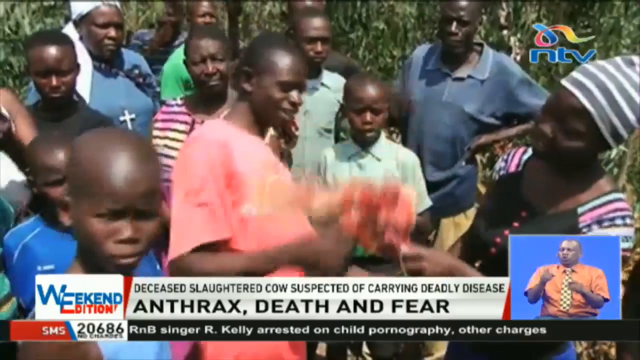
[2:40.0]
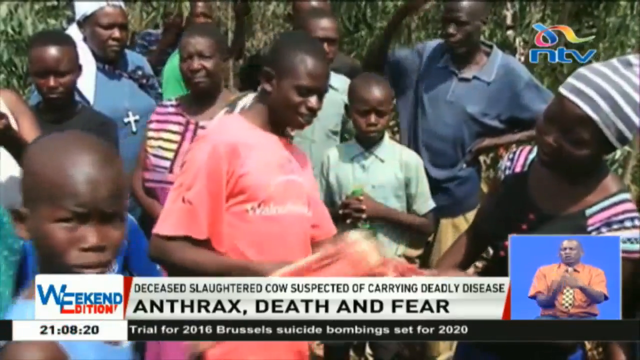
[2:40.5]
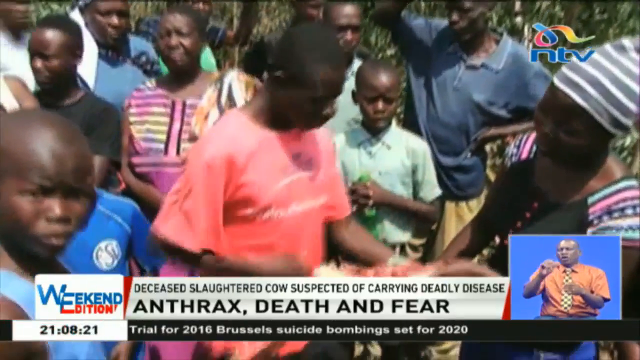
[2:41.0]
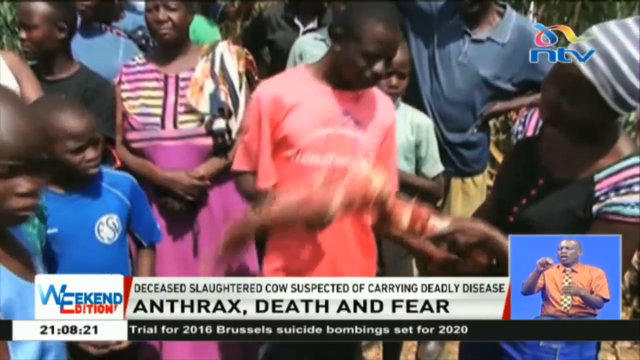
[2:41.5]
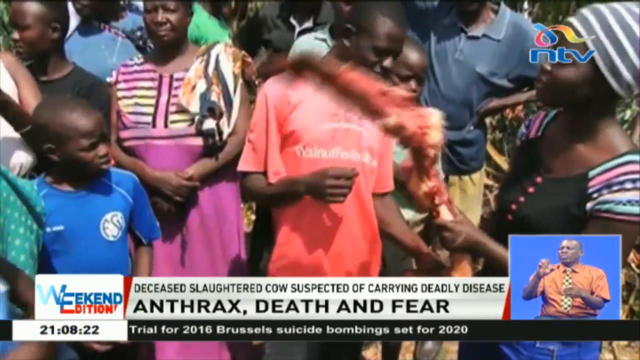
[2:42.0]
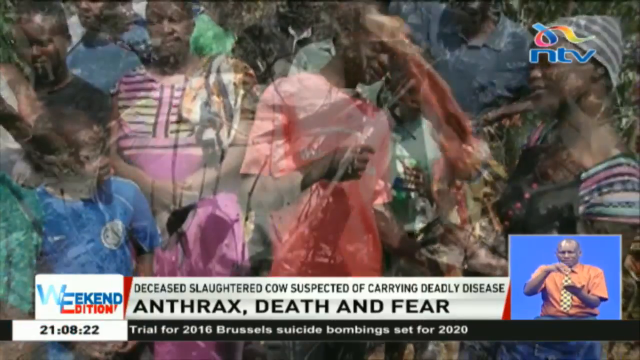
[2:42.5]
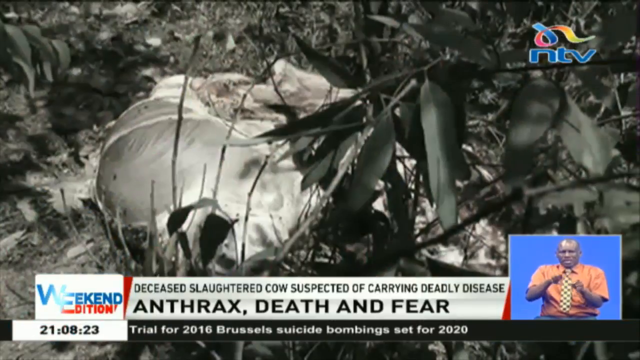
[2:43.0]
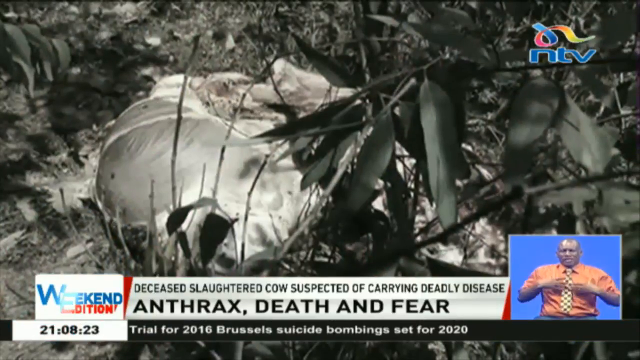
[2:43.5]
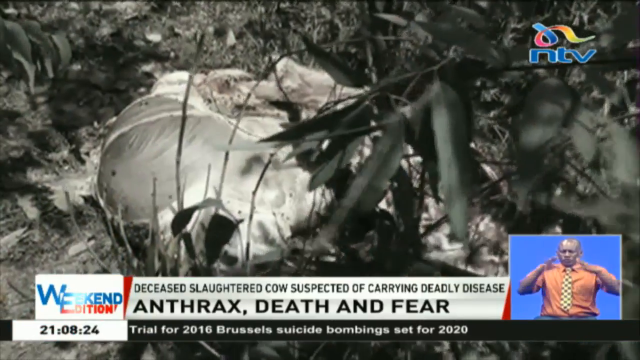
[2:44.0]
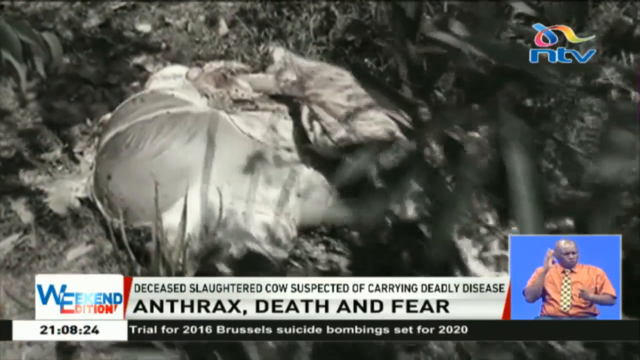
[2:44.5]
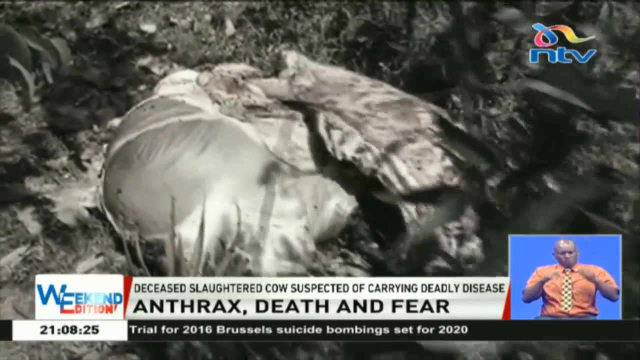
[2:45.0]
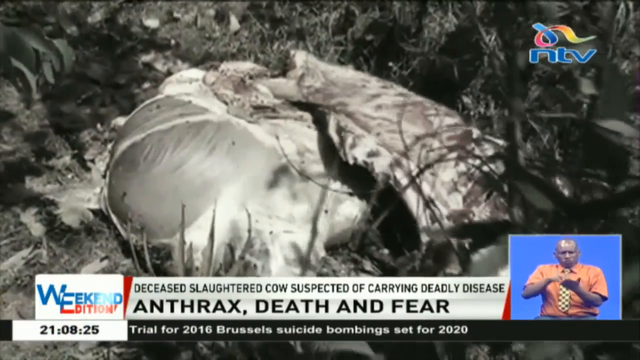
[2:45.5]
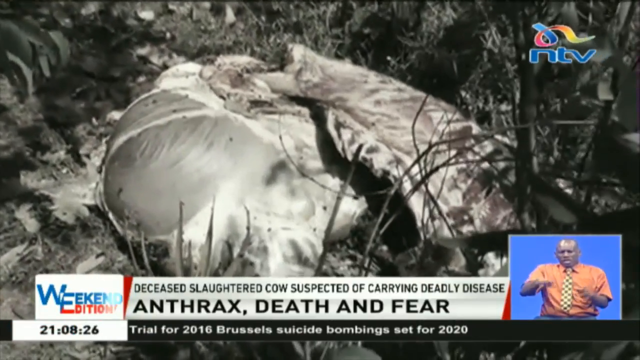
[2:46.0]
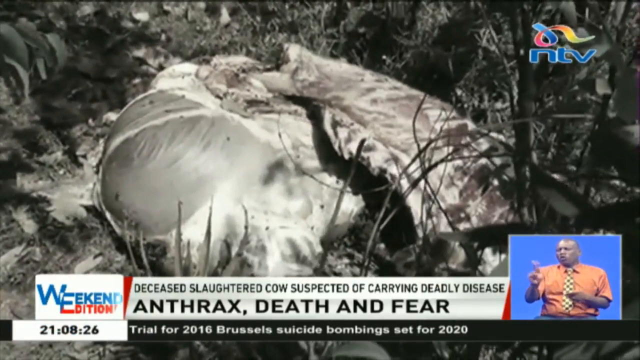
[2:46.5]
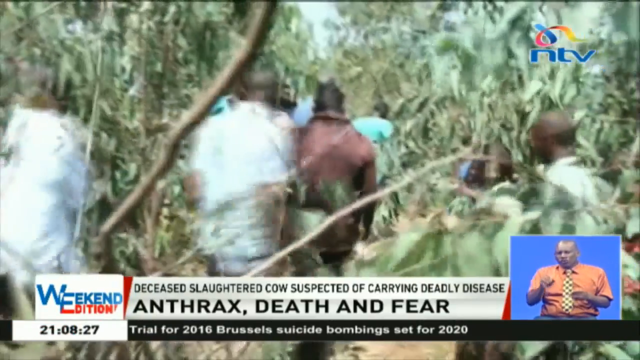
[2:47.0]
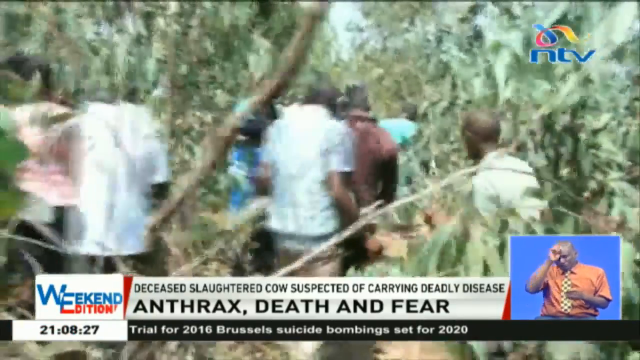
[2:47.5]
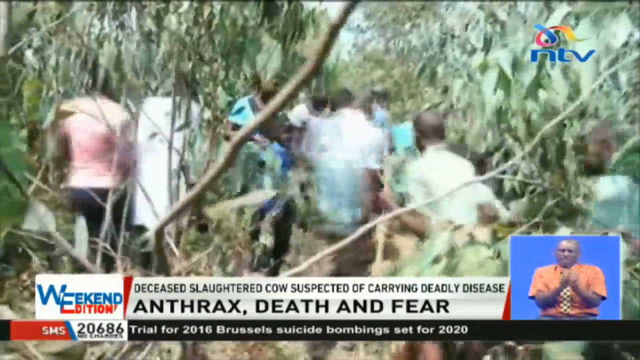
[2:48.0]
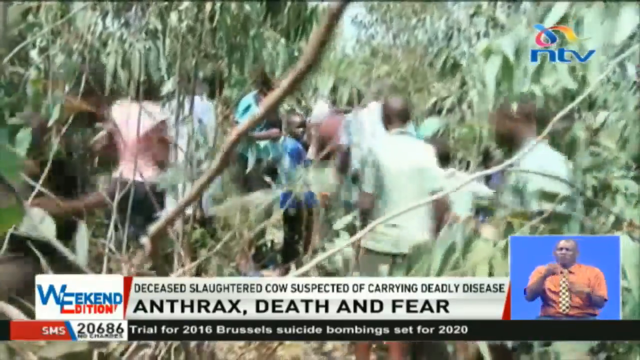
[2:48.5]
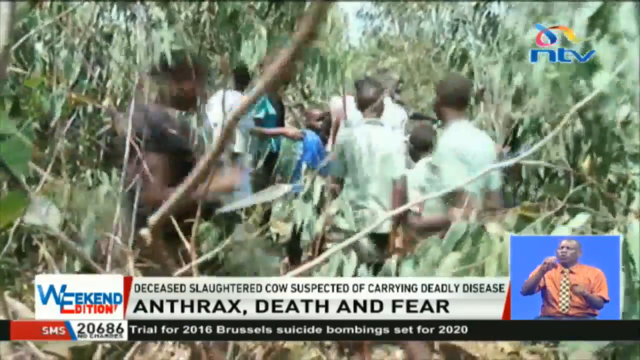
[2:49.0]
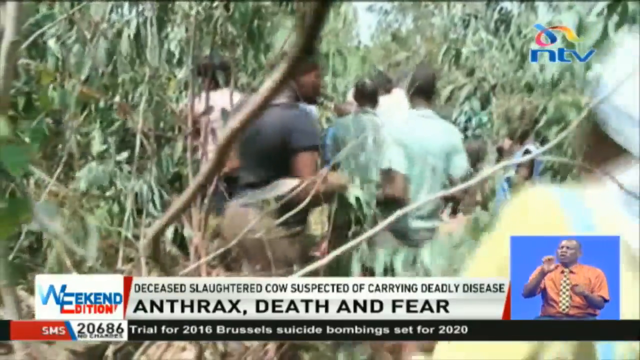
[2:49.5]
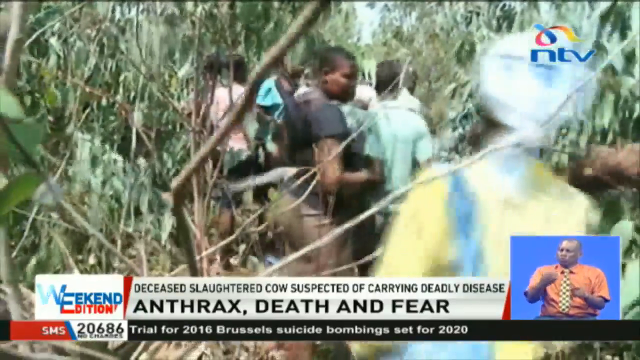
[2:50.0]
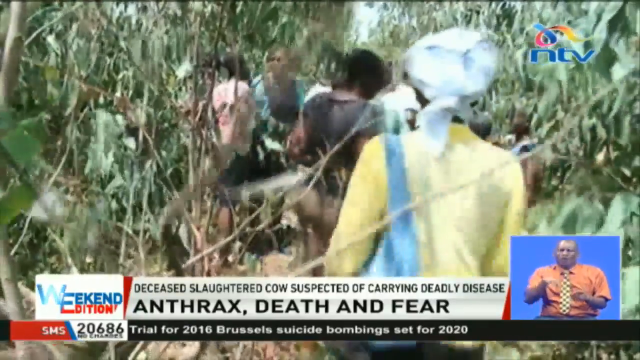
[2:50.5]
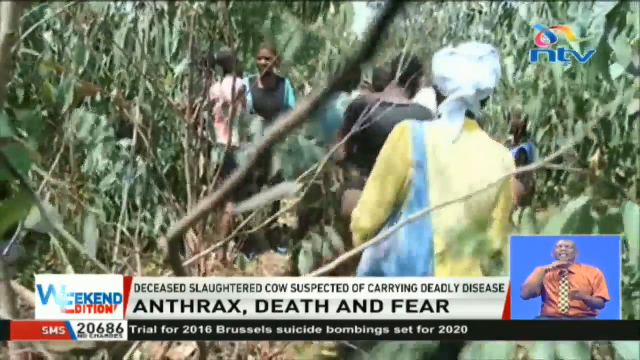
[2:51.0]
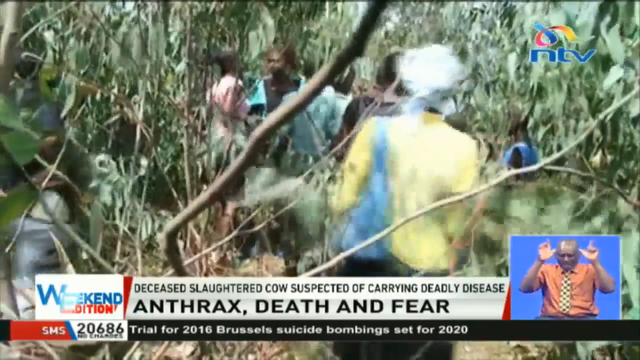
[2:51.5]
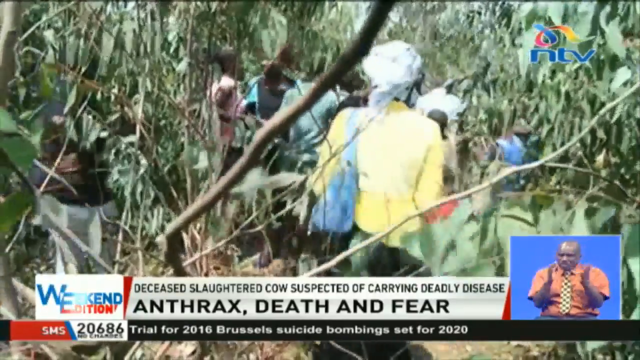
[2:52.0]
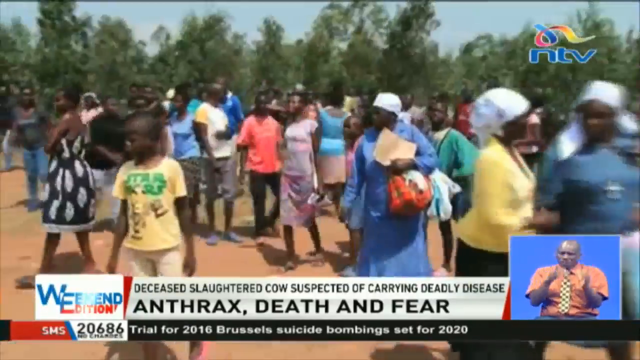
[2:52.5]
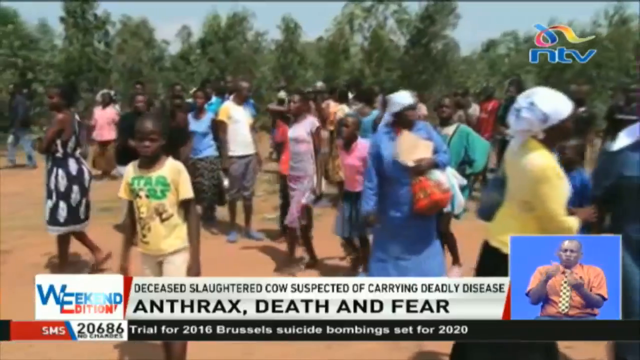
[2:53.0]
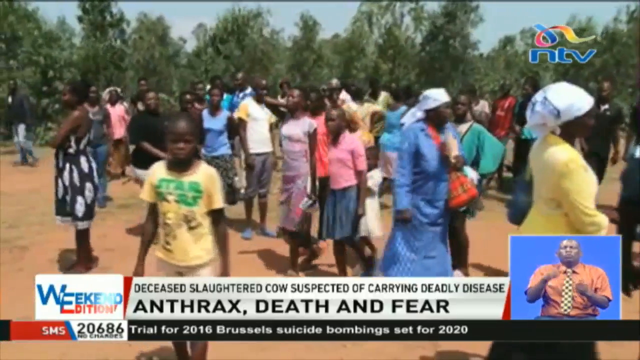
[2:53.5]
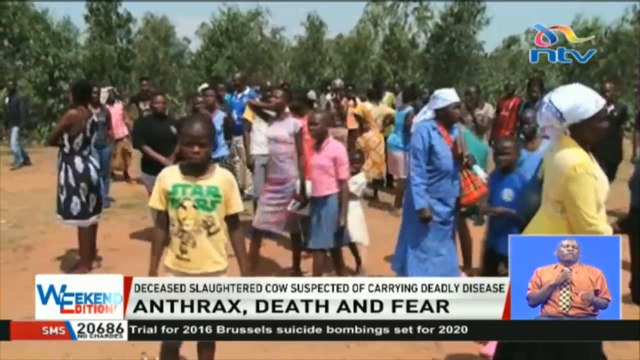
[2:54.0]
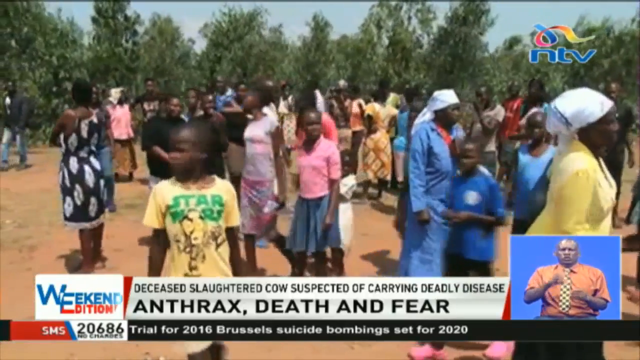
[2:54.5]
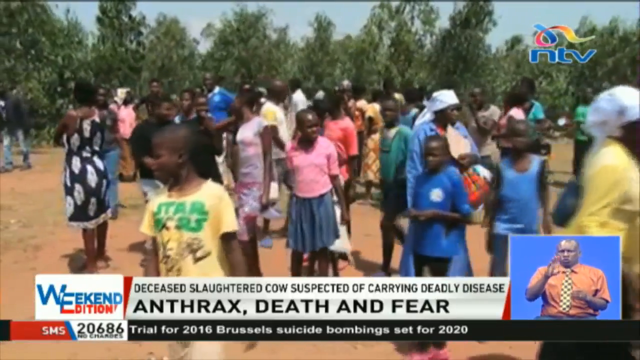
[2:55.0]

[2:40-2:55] A group of African people are gathered around while a woman holds some type of red bird-like carcass. Next is what looks like a white bird-like carcass on the ground, kind of near some bushes; it looks like a big white heap of some white object with wings. A bunch of people then appear to be walking through a bush area with really tall bushes and vines. Another shot shows a large group of African people walking on light brown dirt ground, with some trees in the background and a bright blue sky; there is a mix of lots of young children, young adults and old people. A white rectangular box at the bottom of the screen reads "deceased slaughtered cow suspected of carrying deadly disease", with "anthrax, death and fear" underneath.